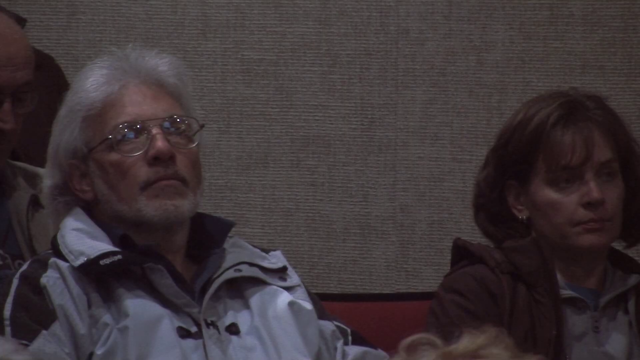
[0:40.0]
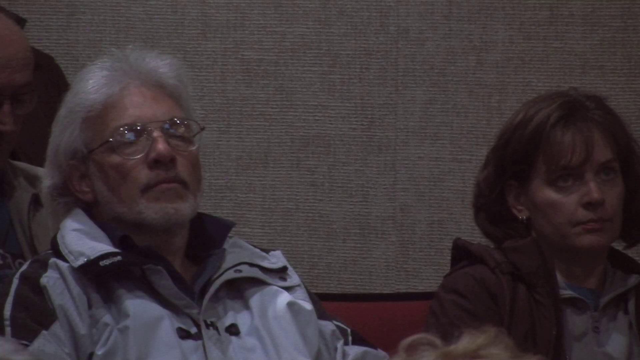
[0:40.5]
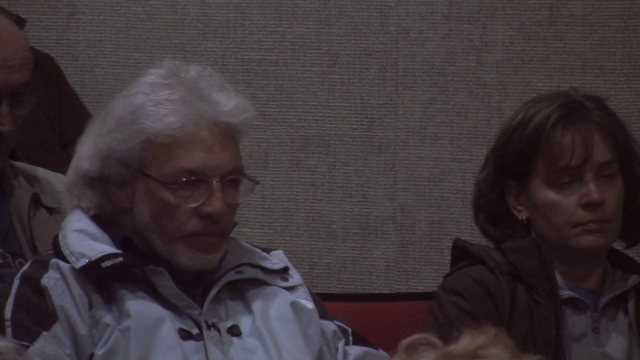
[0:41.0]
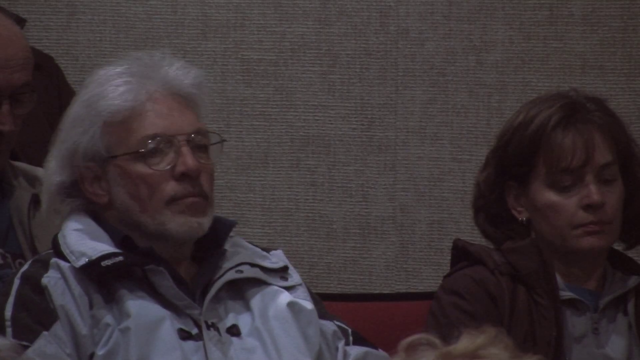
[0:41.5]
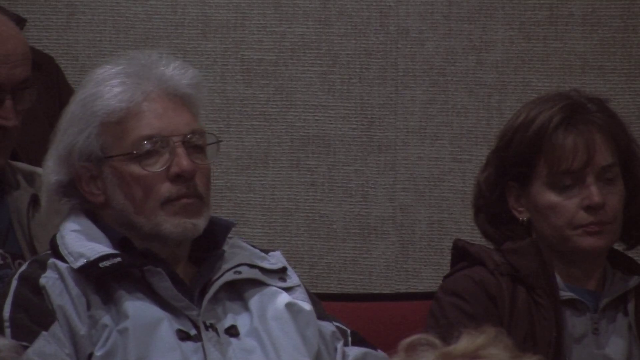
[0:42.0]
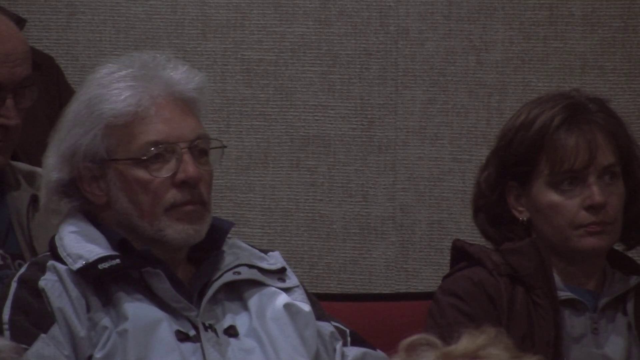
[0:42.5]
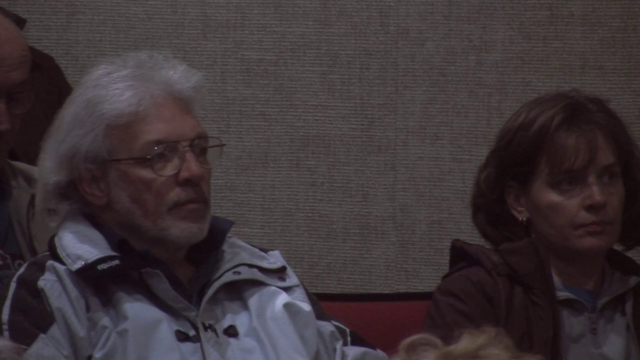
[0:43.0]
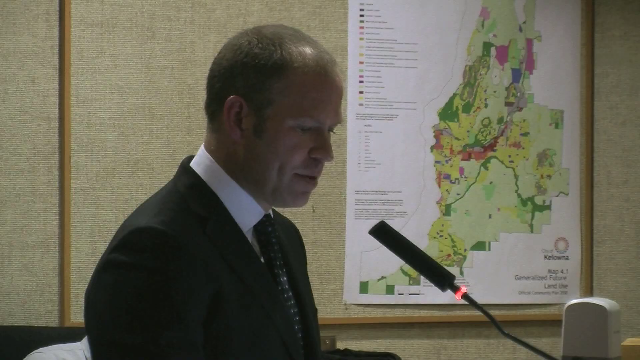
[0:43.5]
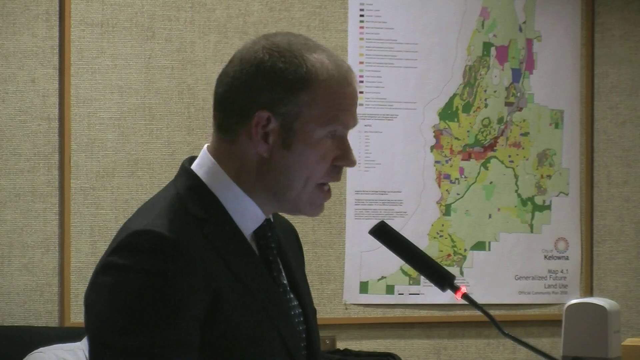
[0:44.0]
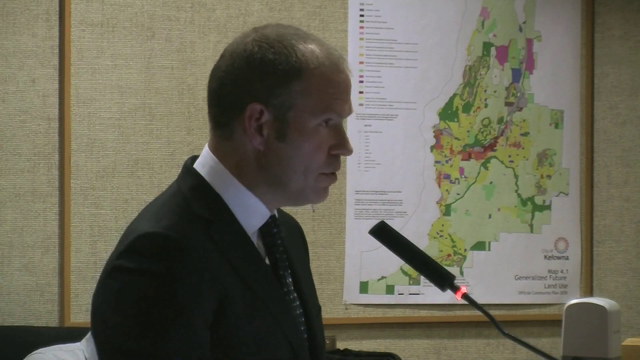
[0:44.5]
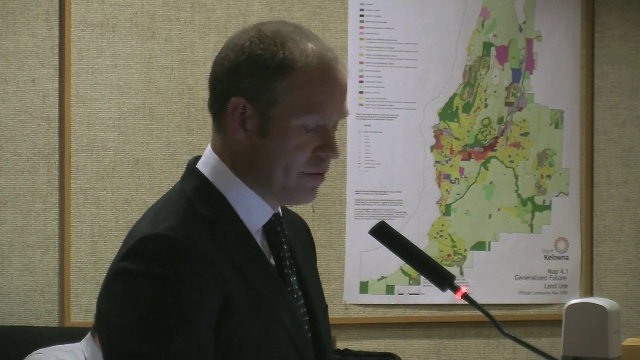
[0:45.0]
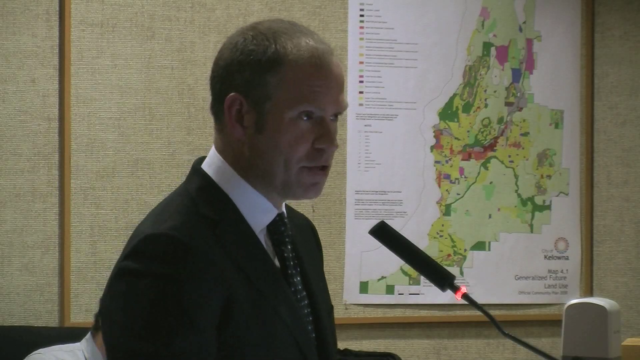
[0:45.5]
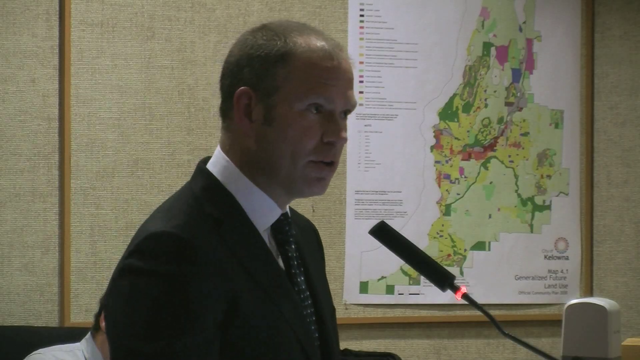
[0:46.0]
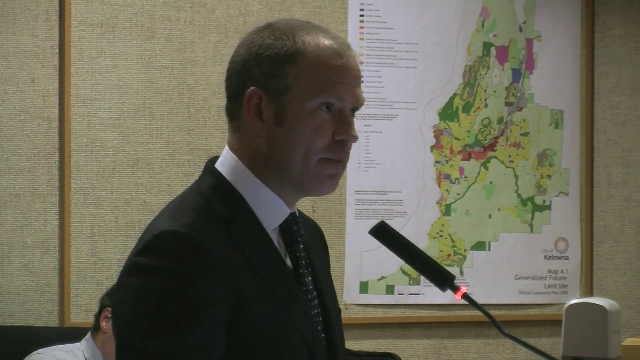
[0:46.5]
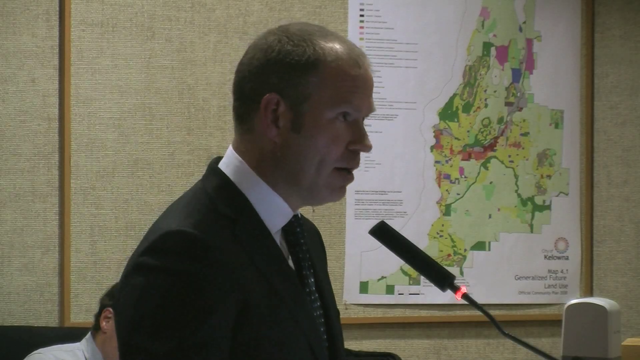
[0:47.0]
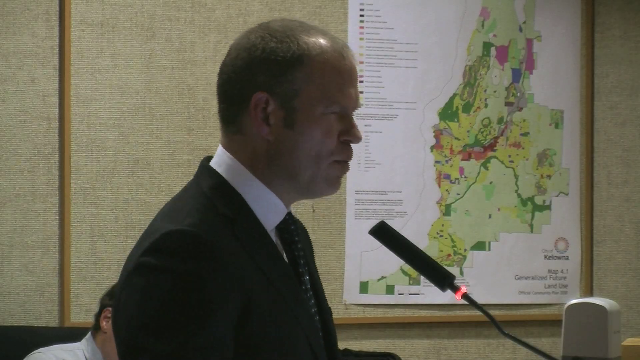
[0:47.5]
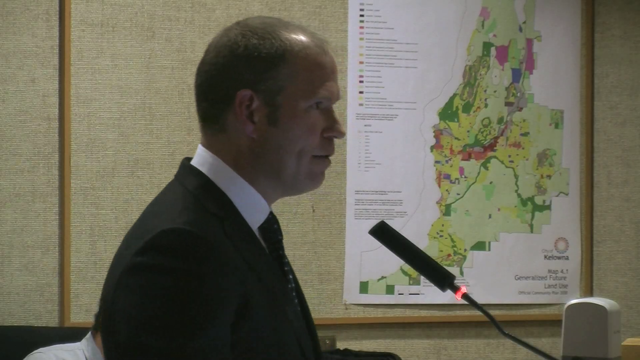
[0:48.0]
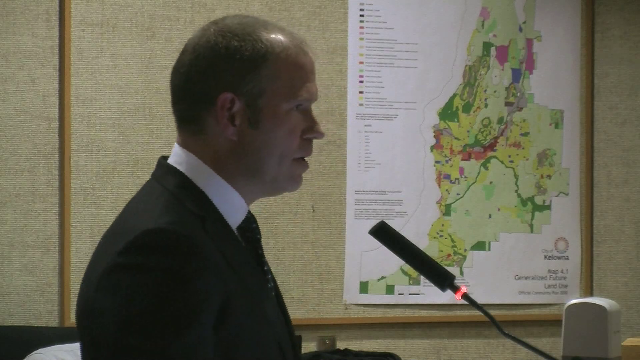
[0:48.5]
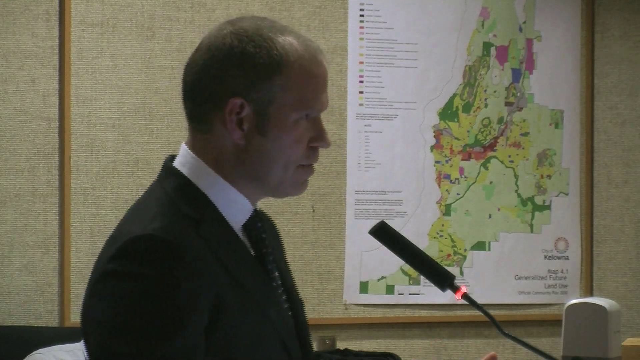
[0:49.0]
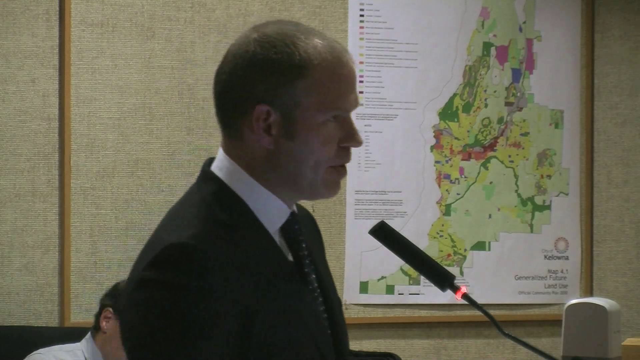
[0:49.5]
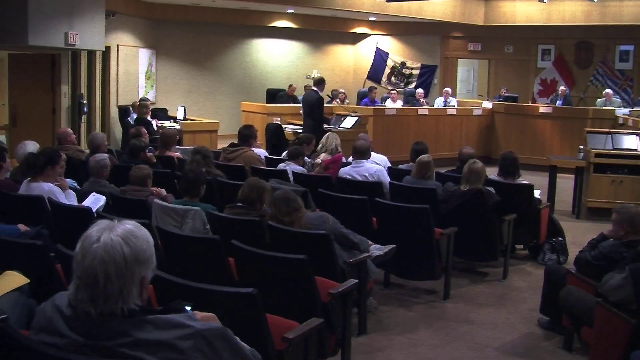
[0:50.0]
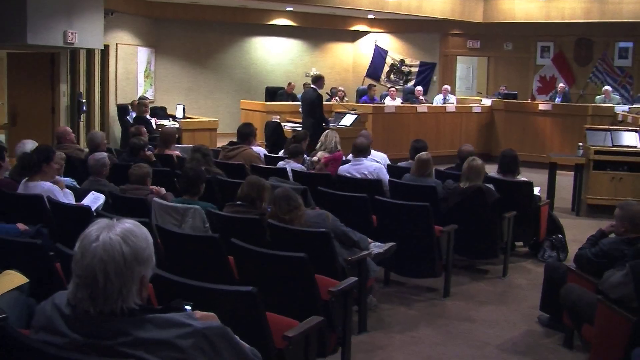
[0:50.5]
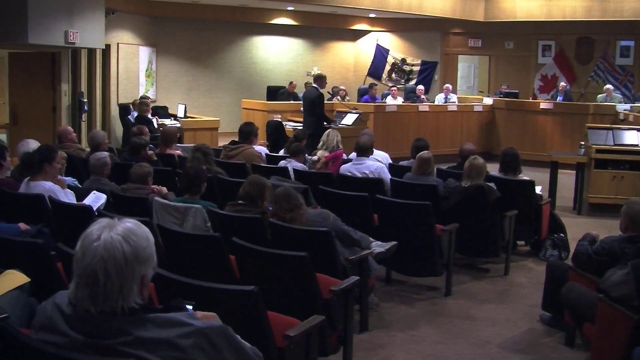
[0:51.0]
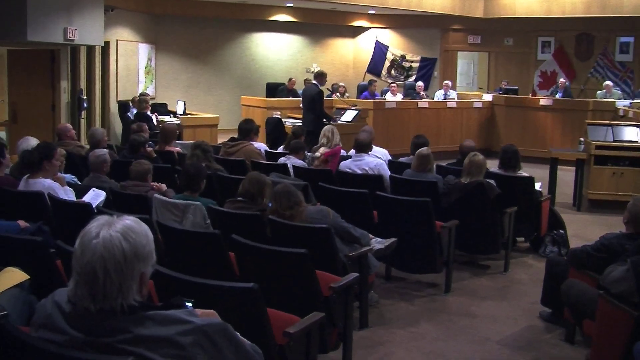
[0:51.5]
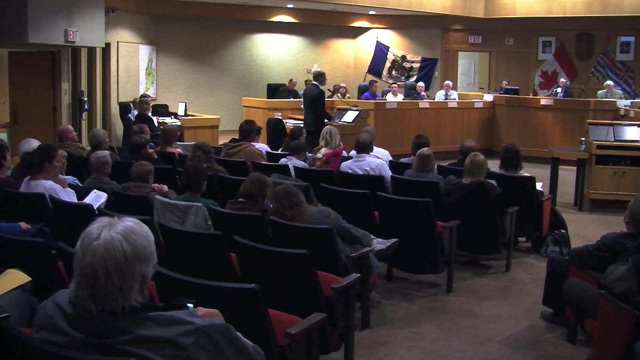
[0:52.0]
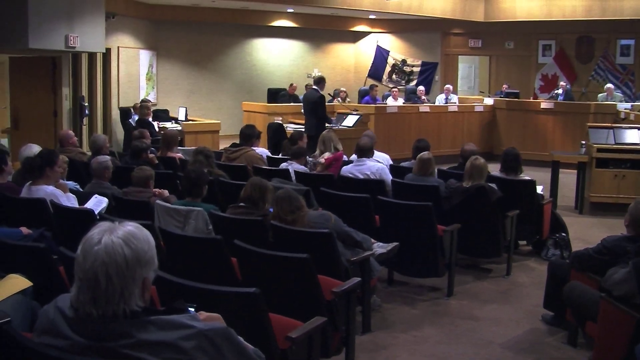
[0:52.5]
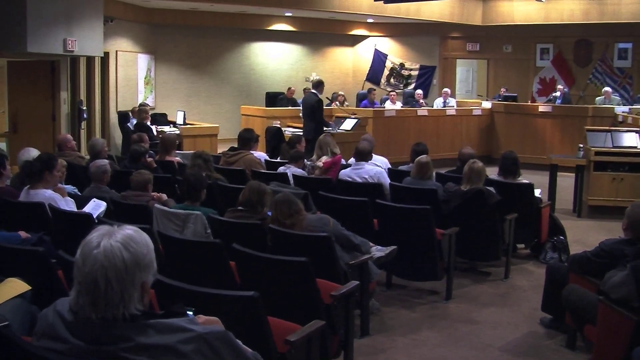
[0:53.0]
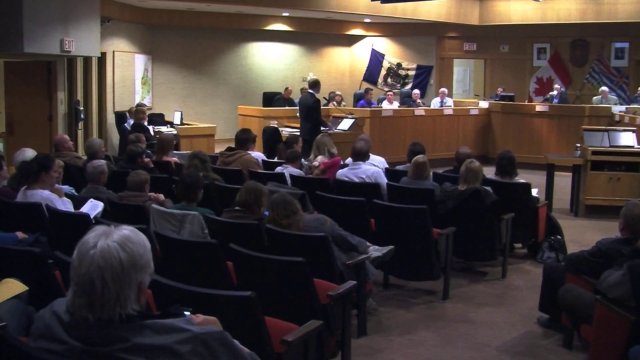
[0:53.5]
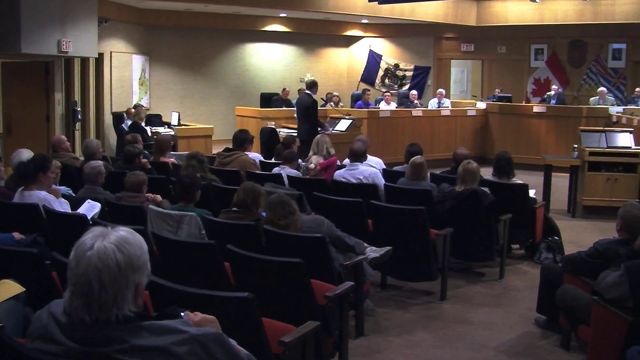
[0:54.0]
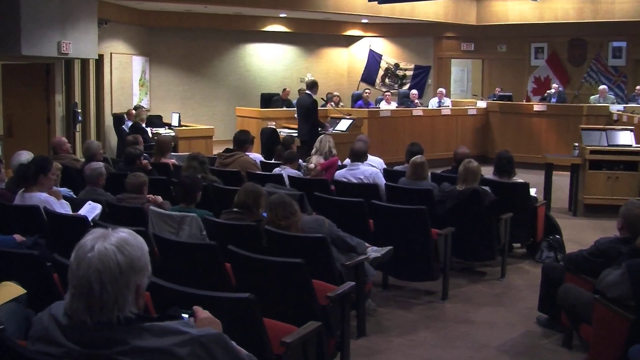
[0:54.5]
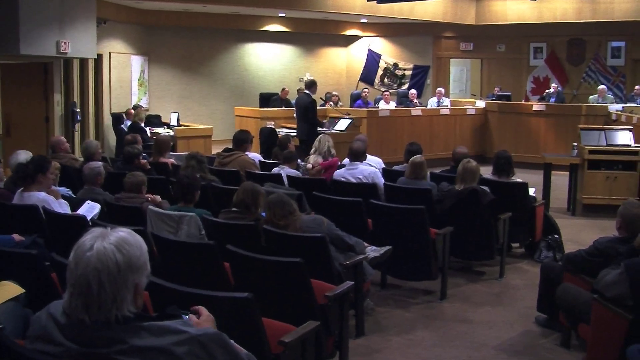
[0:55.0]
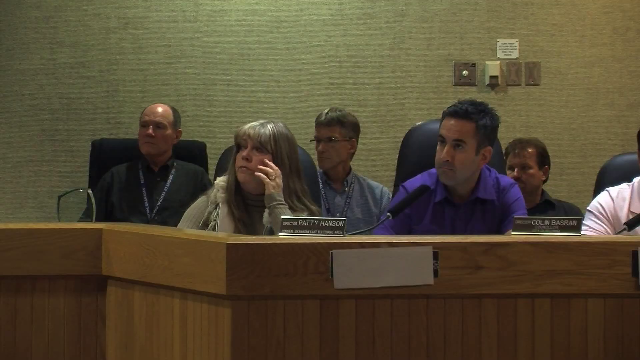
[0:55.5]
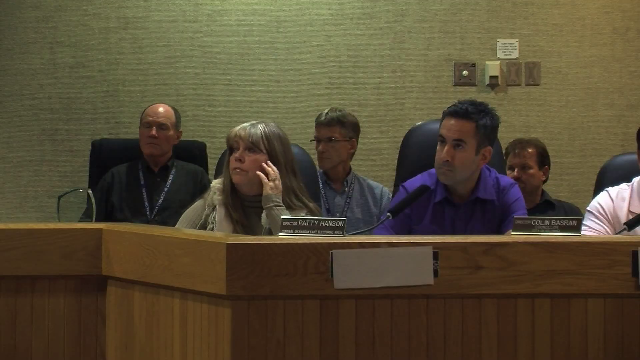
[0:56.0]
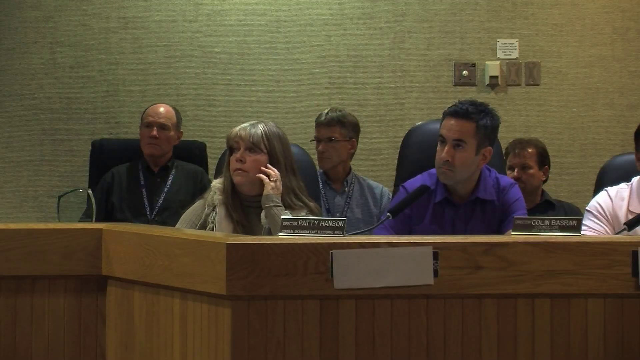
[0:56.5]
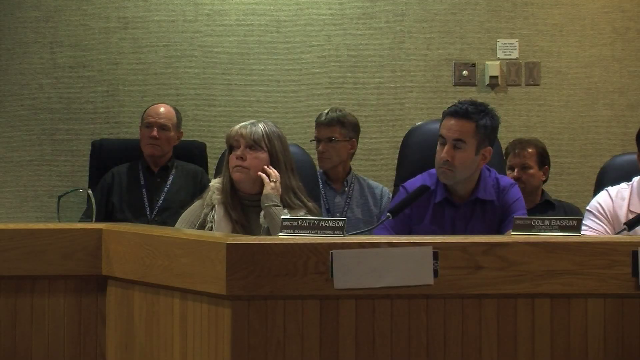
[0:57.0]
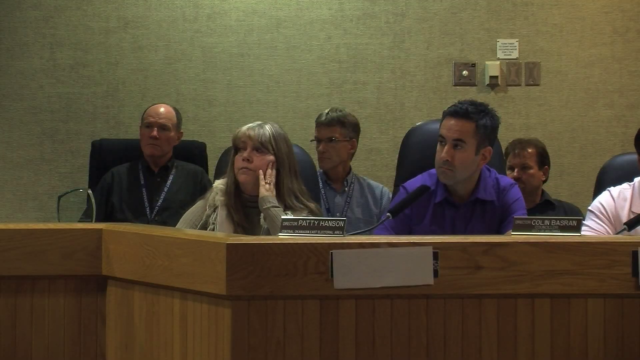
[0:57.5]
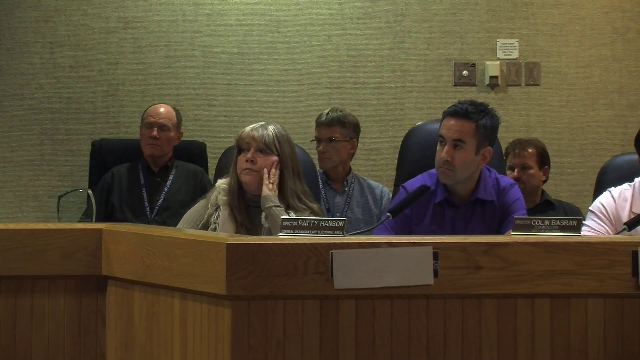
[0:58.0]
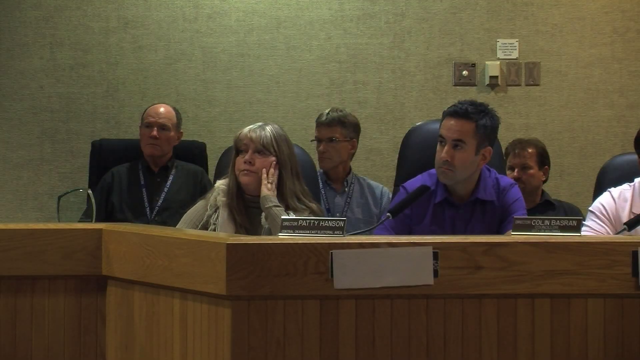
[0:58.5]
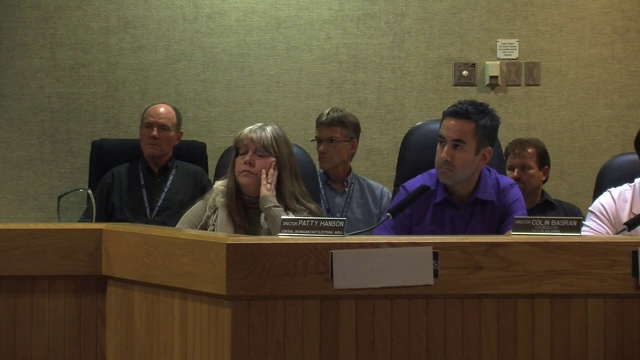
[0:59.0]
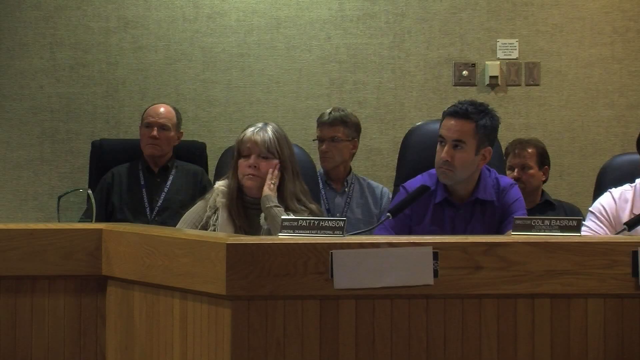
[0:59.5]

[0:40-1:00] An old man with grey hair and a grey beard, wearing spectacles and a grey jersey, is shown. Behind the presenter is a poster showing a map. The panel is a mix of men and women. There do not appear to be any children; the meeting seems to include only older people or adults. Behind the panel are flags from different countries.